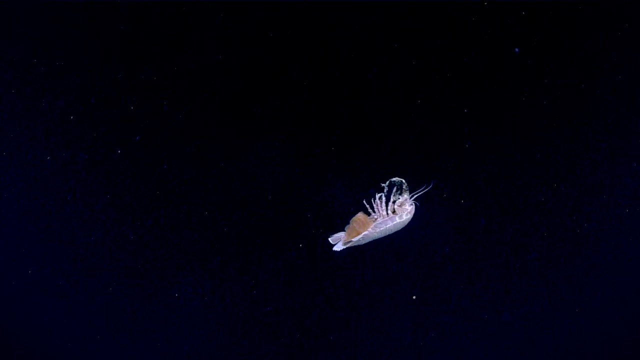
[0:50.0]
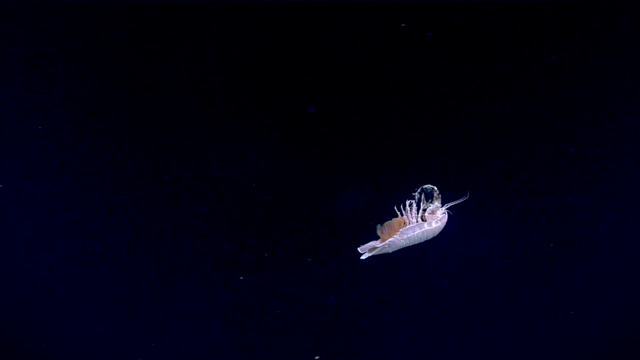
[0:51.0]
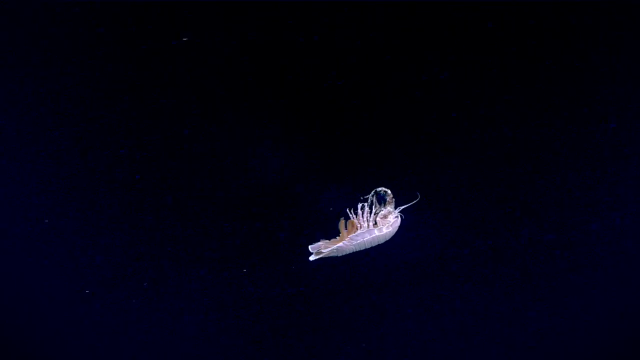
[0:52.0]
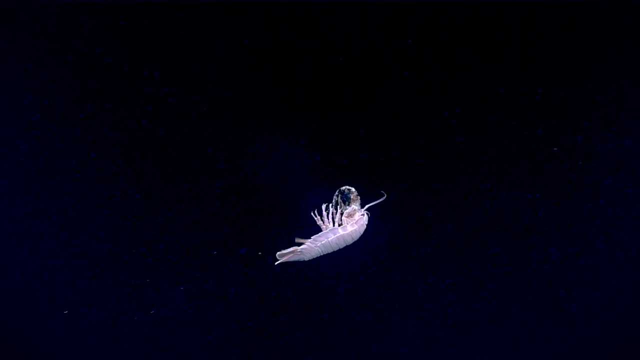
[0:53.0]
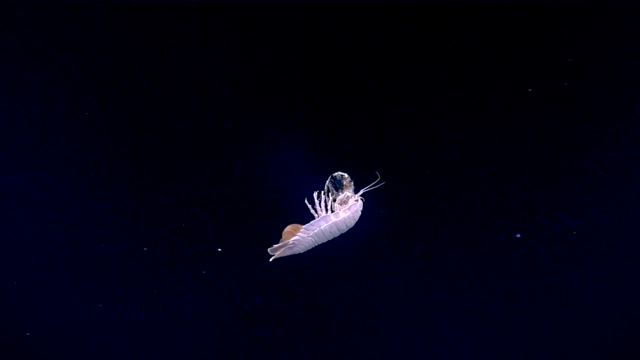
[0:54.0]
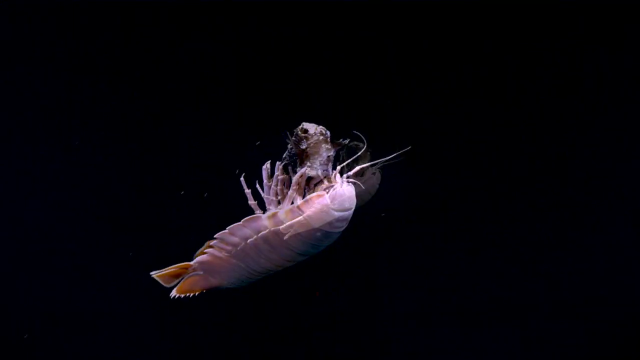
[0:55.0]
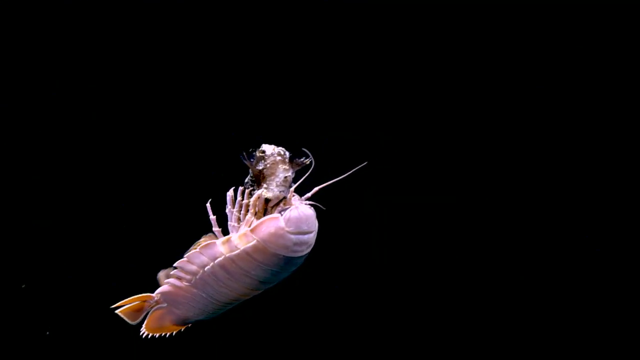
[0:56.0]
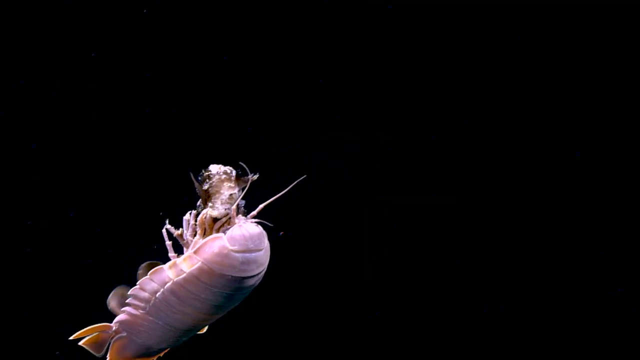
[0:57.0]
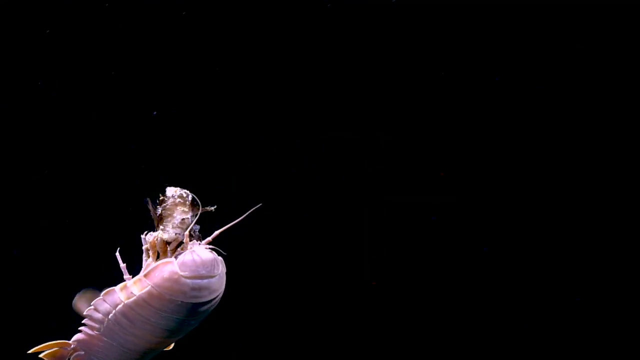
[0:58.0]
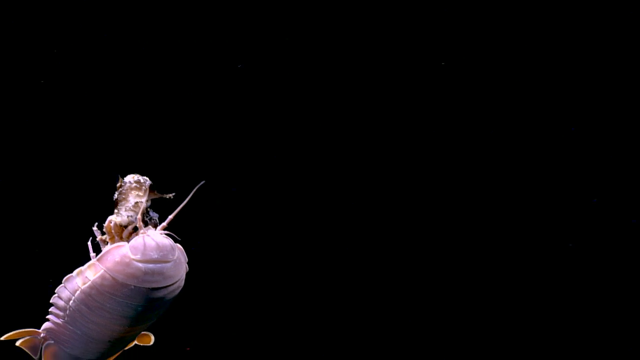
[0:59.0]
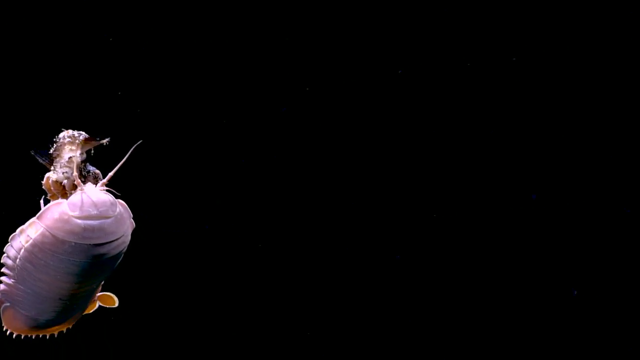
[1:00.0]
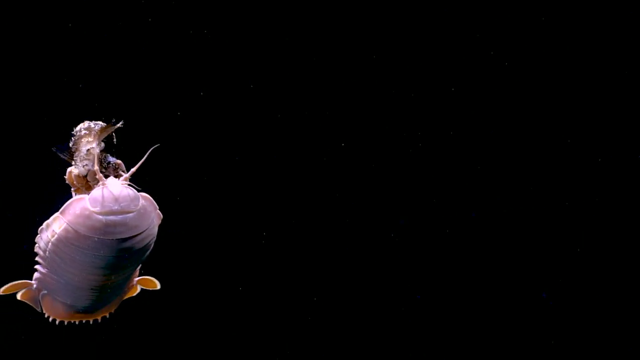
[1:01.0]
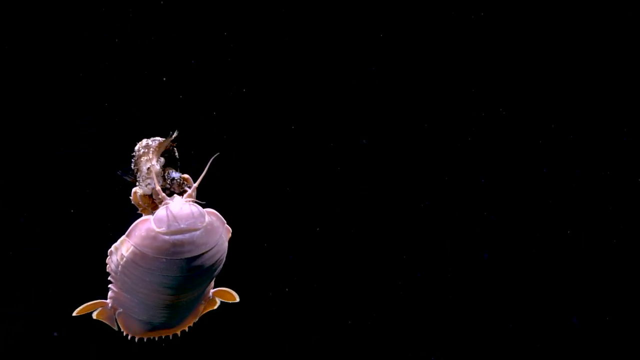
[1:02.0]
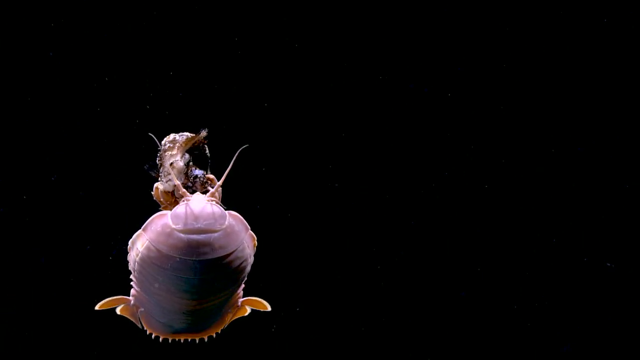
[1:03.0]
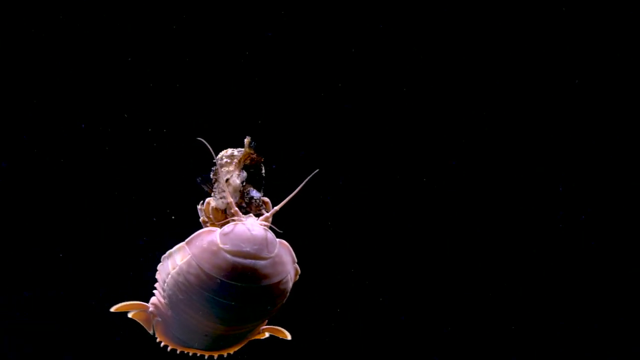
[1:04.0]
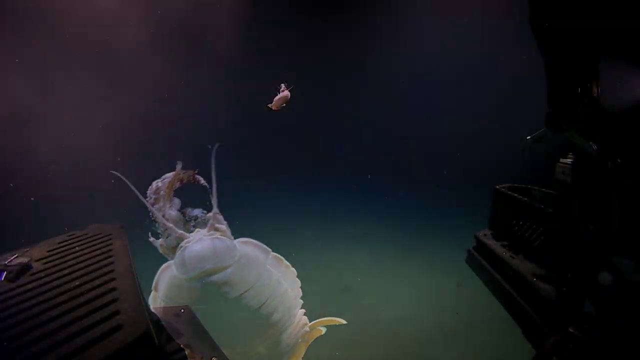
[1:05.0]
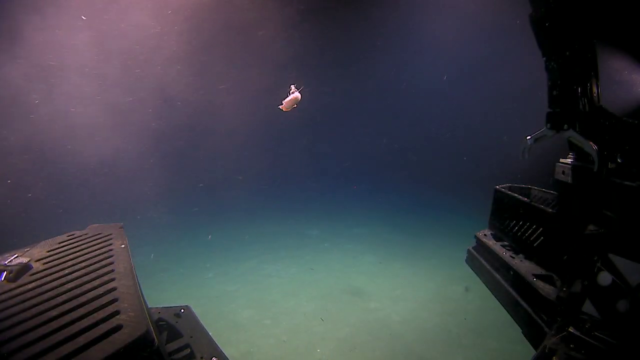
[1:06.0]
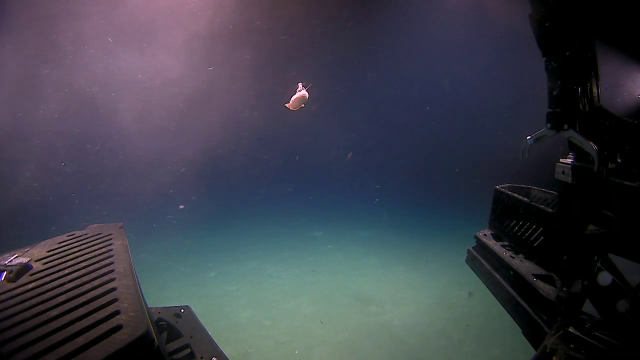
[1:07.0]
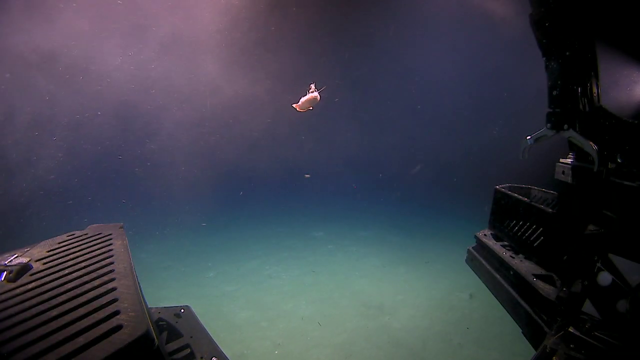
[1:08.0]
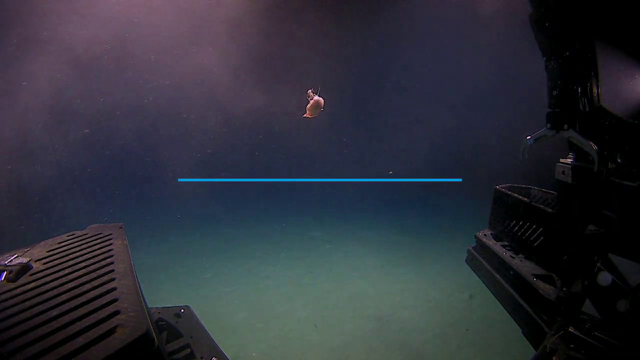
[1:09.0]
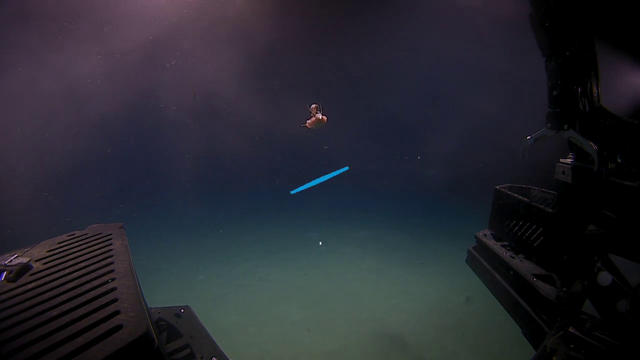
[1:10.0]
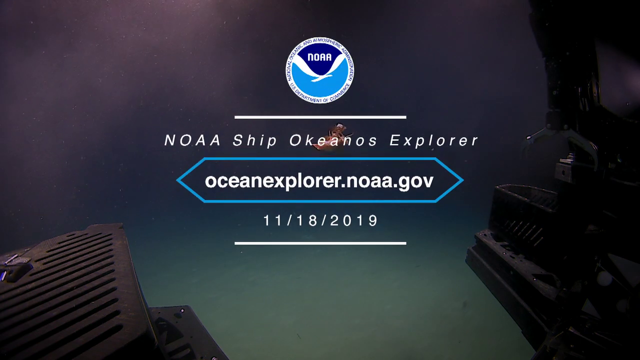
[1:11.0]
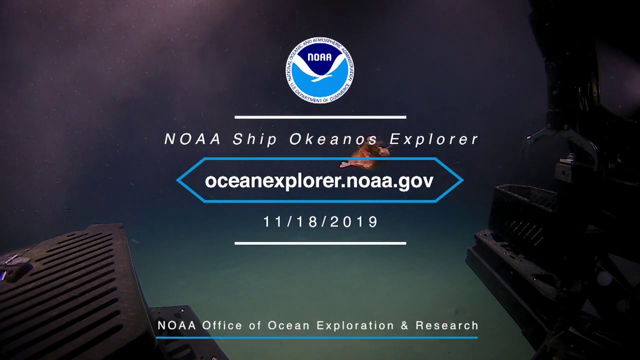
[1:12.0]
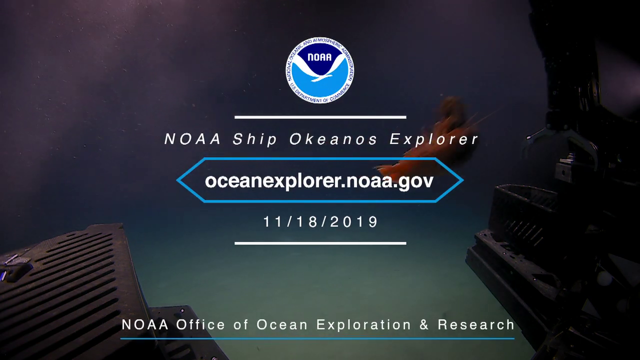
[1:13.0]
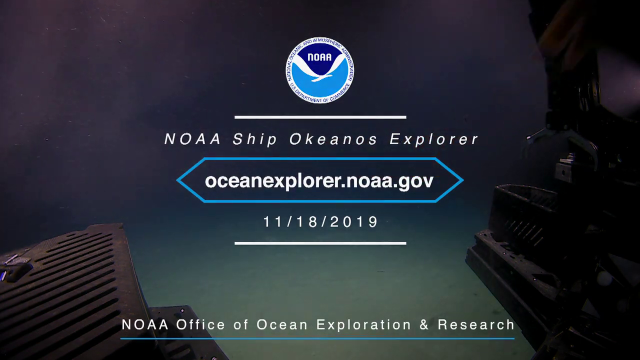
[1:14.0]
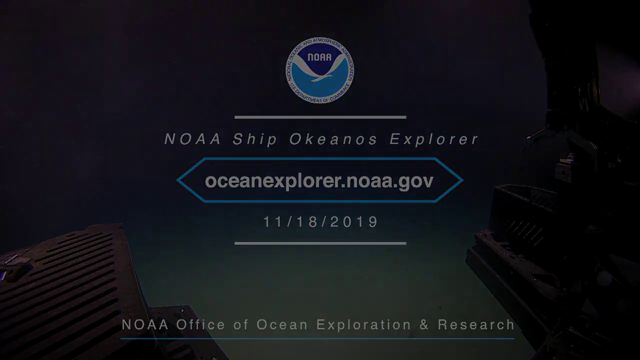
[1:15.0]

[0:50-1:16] The background is now completely dark, and the sand is no longer visible as the isopod swims in the distance. Its upper legs are floating still, not moving at all. It swims with its back down and its face up. There is something on top of its head; it is unclear whether it is another organism adhered to it, its legs, its head, or something else. At the end, text on the screen reads "NOAA Ship Okeanos Explorer", with a website below that reads "Oceanoaaexplorer.noaa.gov".